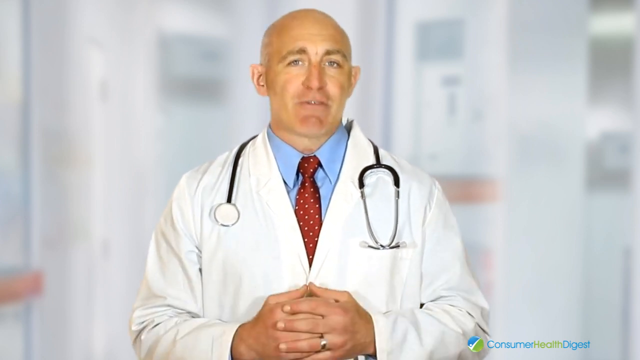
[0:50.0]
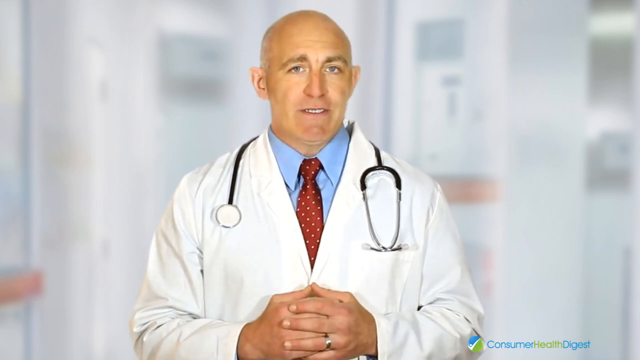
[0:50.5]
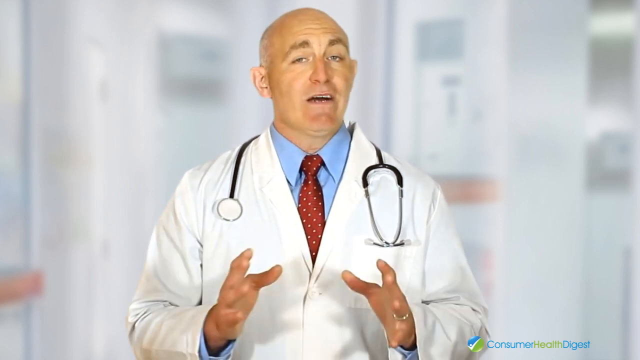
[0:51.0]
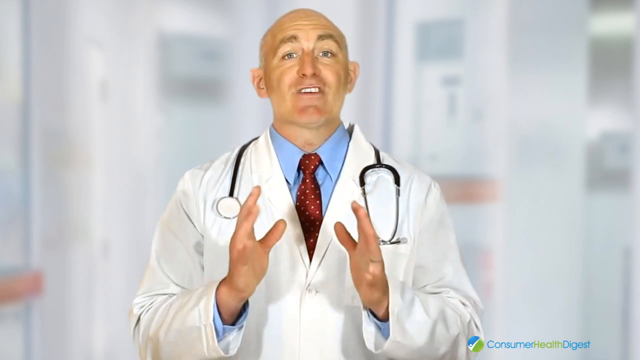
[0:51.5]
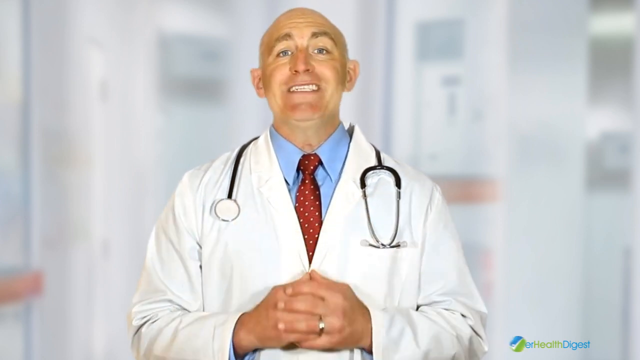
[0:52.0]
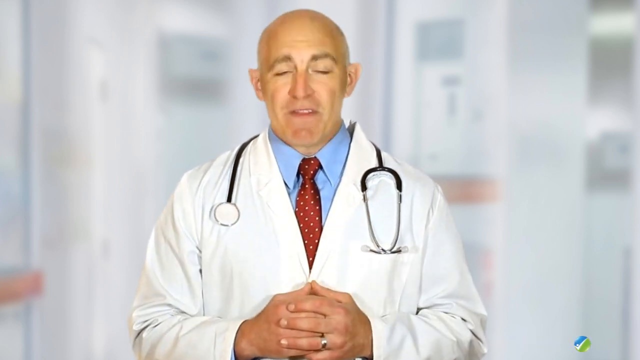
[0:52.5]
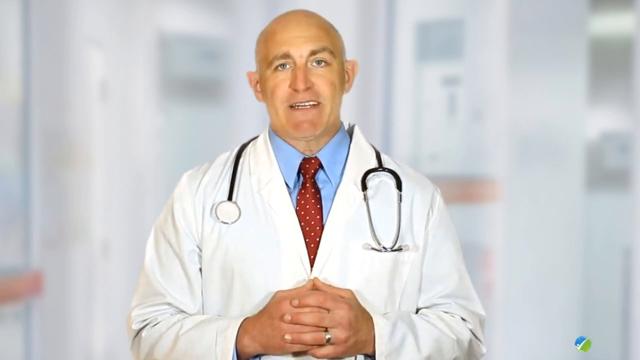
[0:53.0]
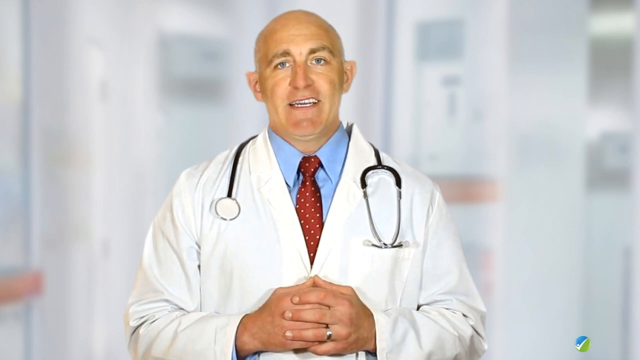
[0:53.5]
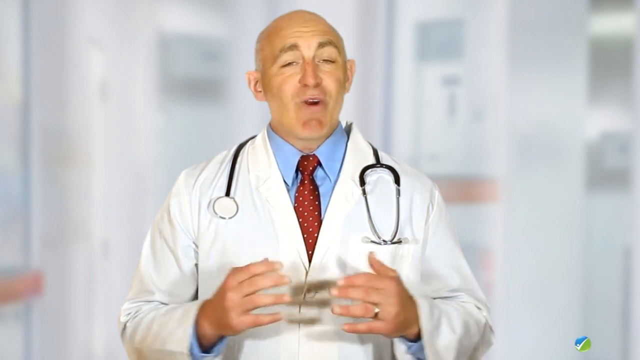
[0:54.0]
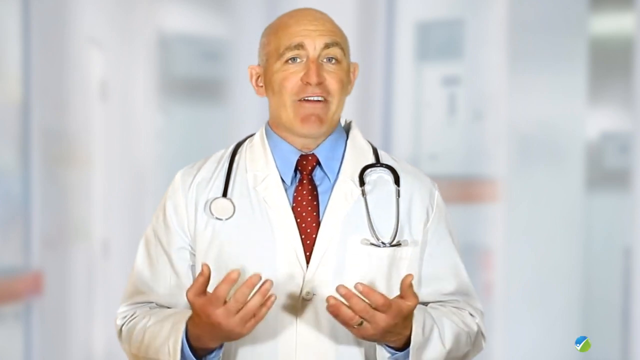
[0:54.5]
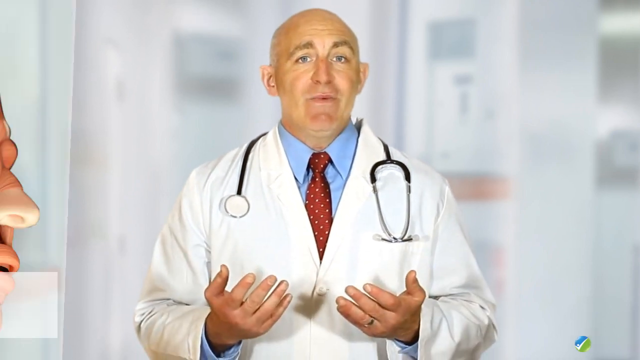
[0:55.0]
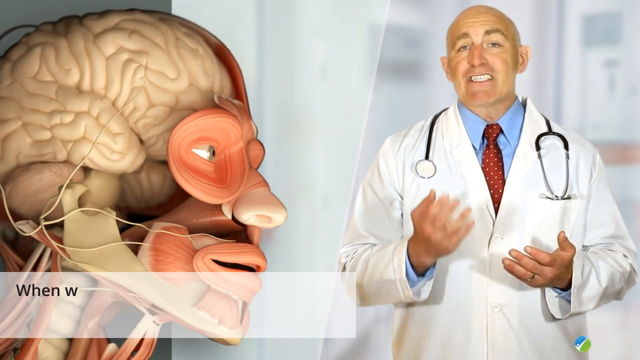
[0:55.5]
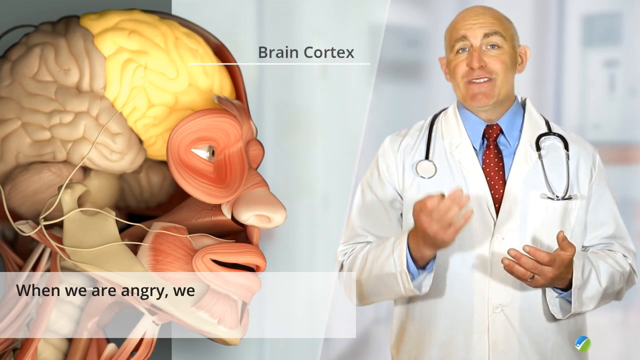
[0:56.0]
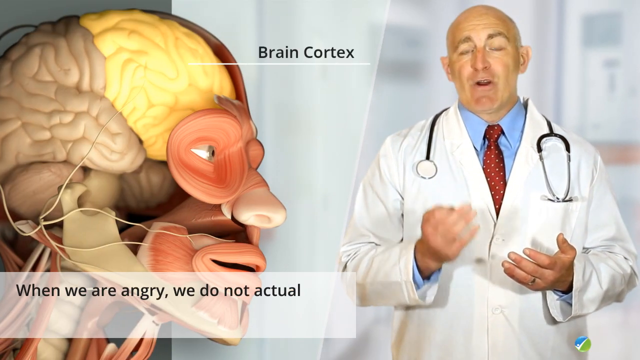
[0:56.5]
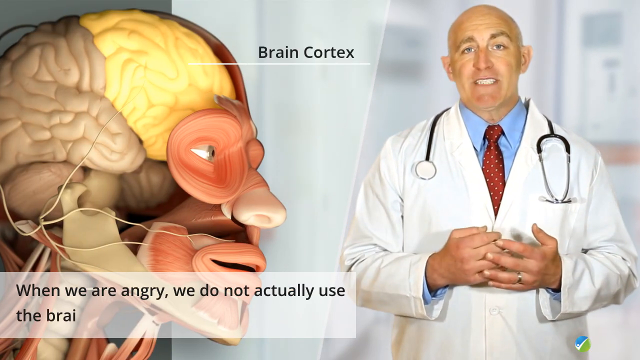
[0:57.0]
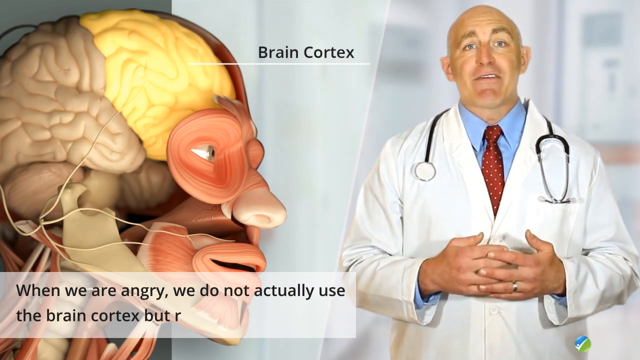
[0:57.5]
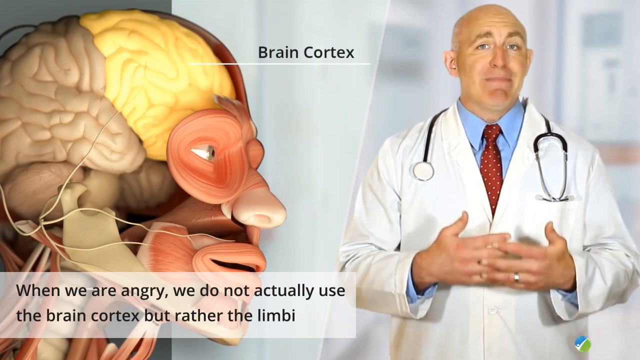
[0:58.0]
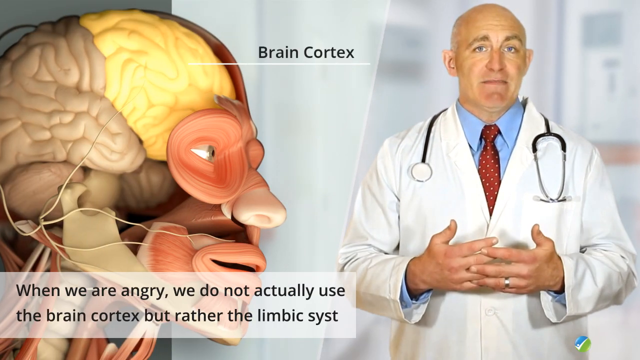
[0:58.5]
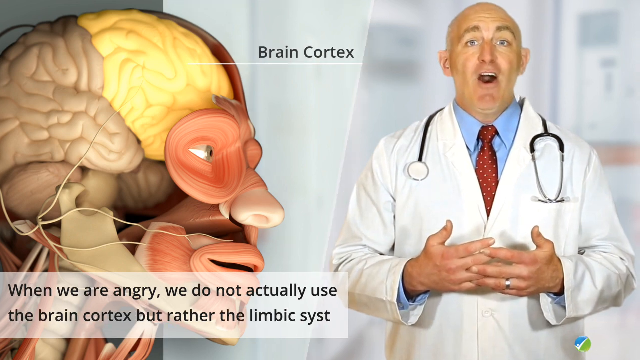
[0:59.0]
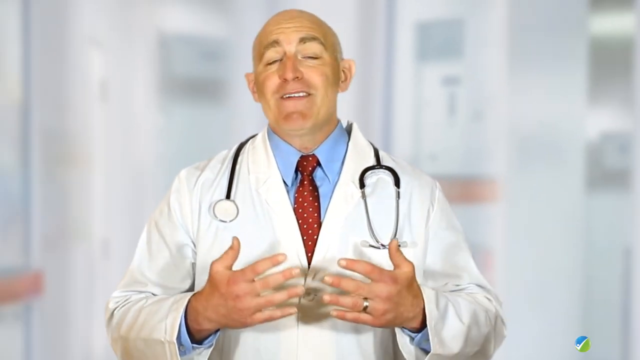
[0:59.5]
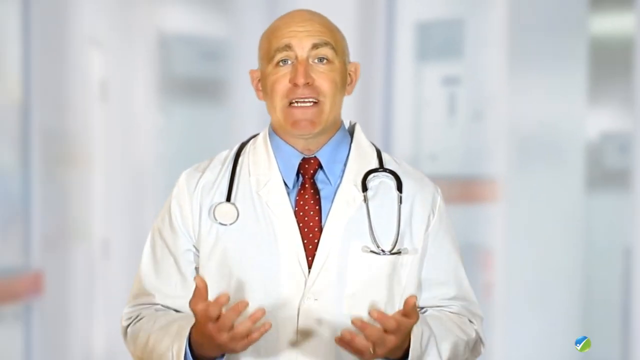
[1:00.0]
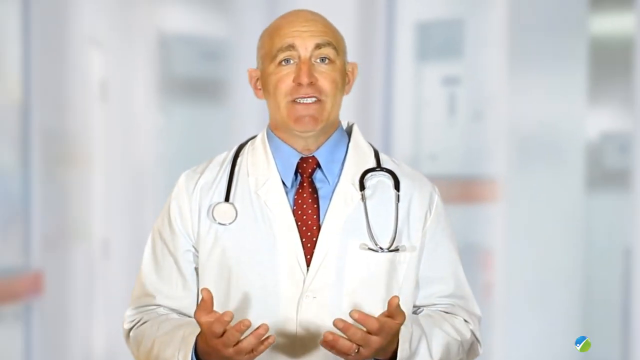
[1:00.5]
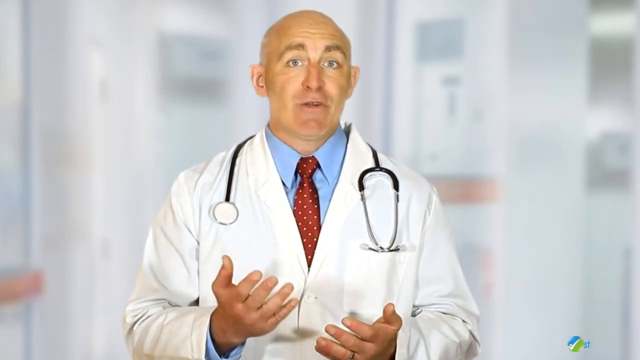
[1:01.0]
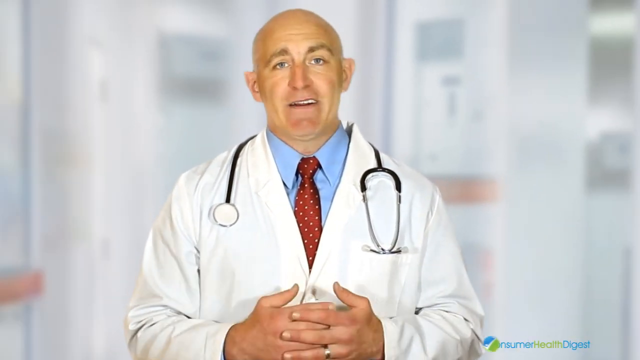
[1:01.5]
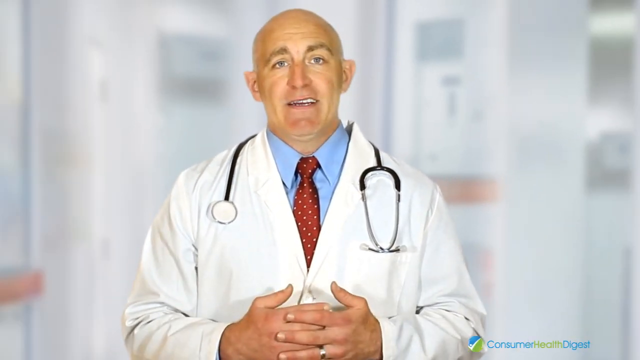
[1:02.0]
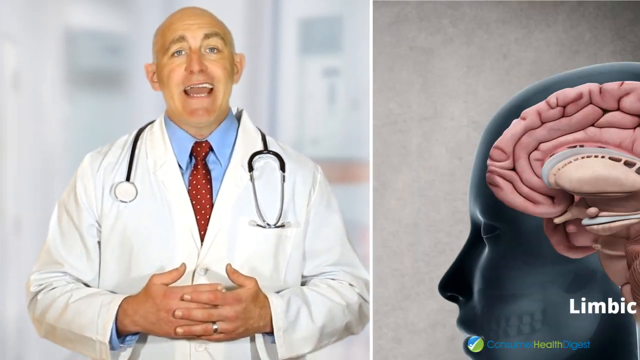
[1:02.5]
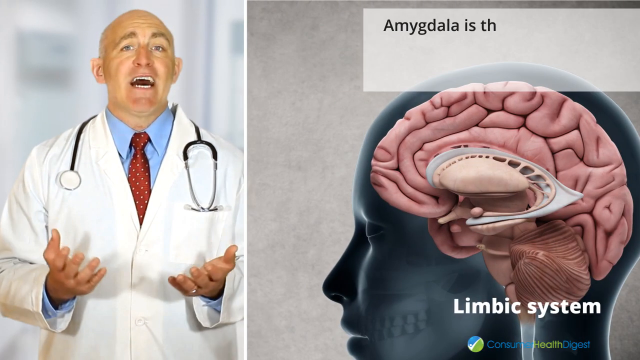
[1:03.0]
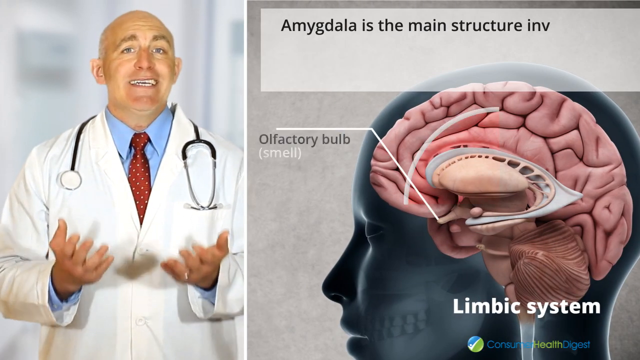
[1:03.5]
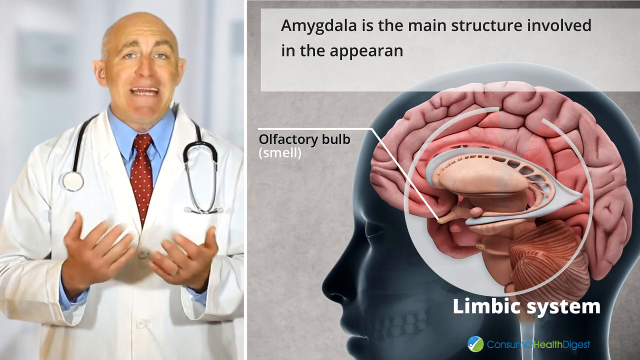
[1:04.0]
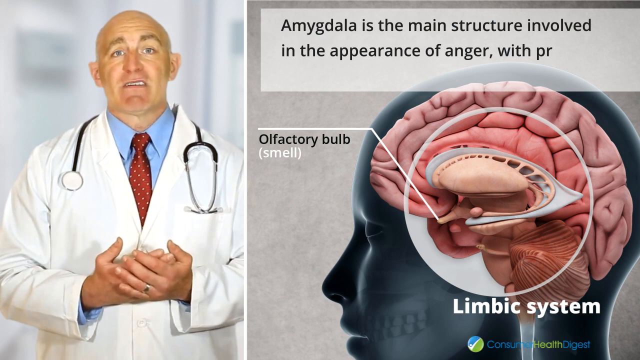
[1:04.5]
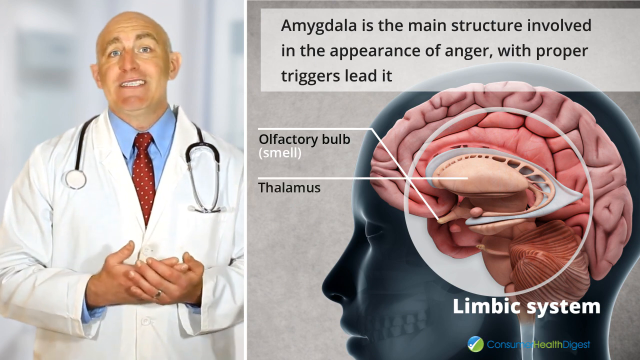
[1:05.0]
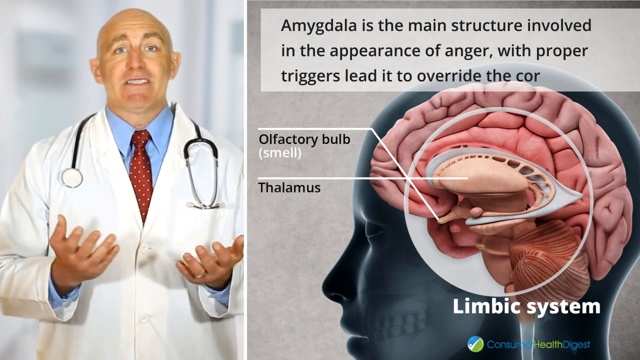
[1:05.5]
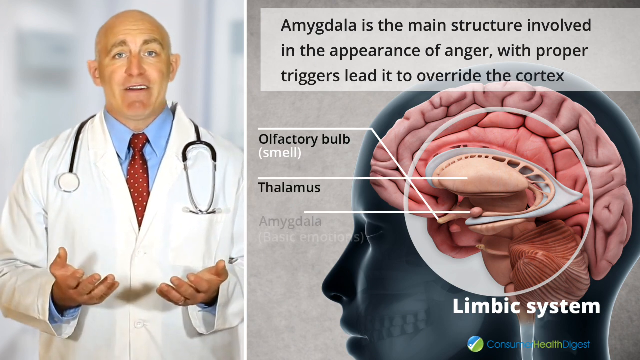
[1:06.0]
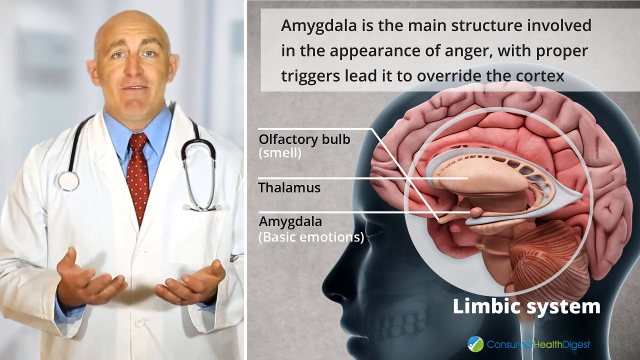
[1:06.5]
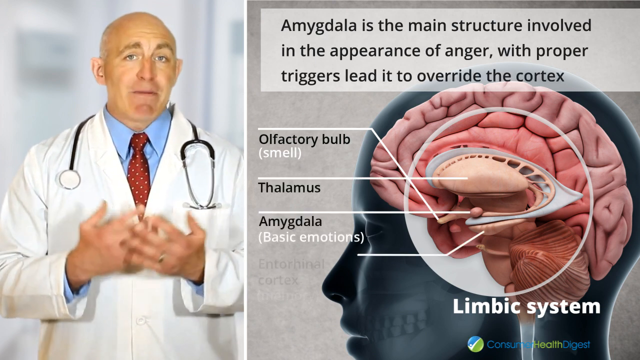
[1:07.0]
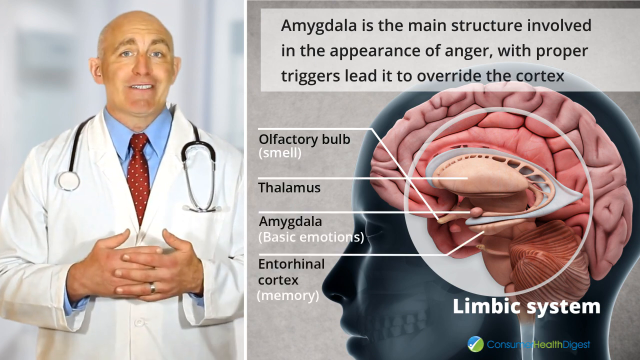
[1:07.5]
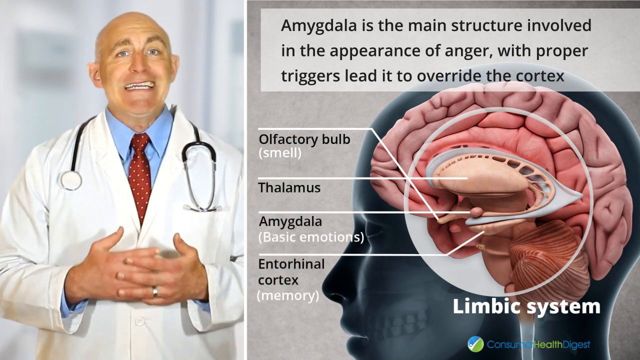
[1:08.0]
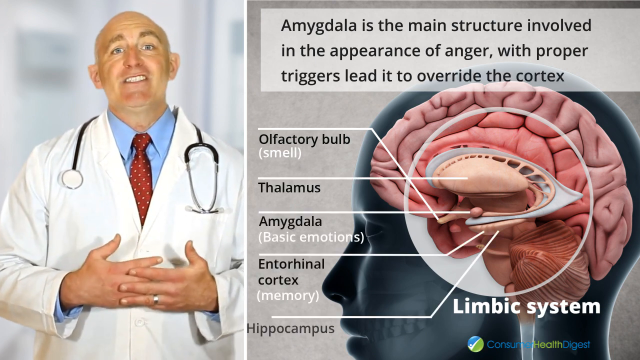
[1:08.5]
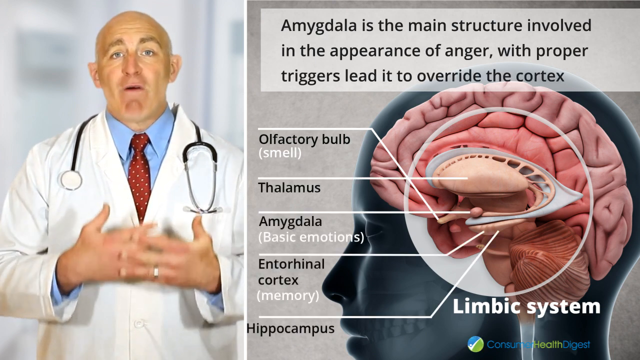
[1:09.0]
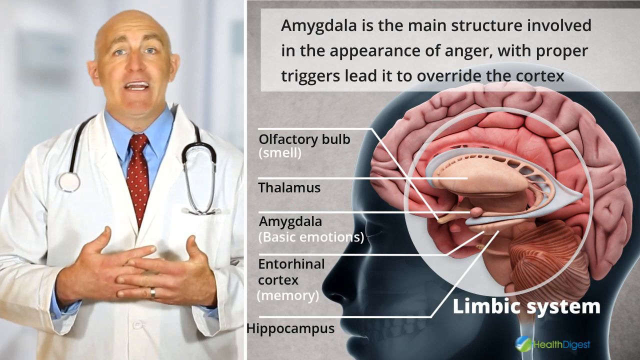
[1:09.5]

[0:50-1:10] As the doctor continues his presentation, a graphic appears on the left side of the screen of a man's head with the skin removed, showing the inner workings of the body. Lines labeled "the brain cortex" point to the brain area. Underneath, text reads "when we are angry we do not actually use the brain cortex but rather the limbic system." The video cuts back to the doctor in the center of the screen as he keeps making his point. Then another brain appears on the right side of the screen, with a graphic pointing to the "Olfactory bulb," "Thalamus," "Amygdala," and "Entorhinal Cortex." The text above reads "Amygdala is the main structure involved in the appearance of anger, with proper triggers lead it to override the cortex."